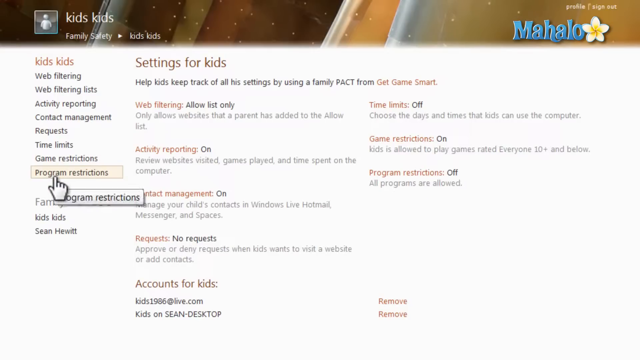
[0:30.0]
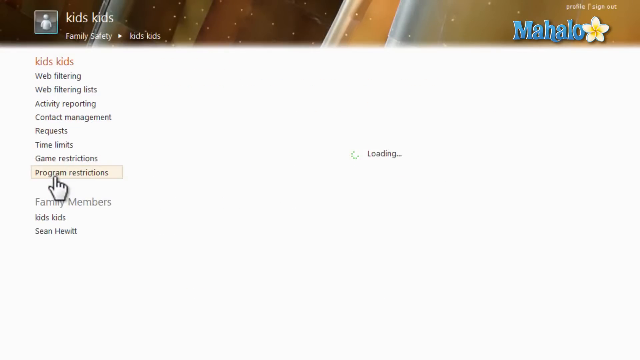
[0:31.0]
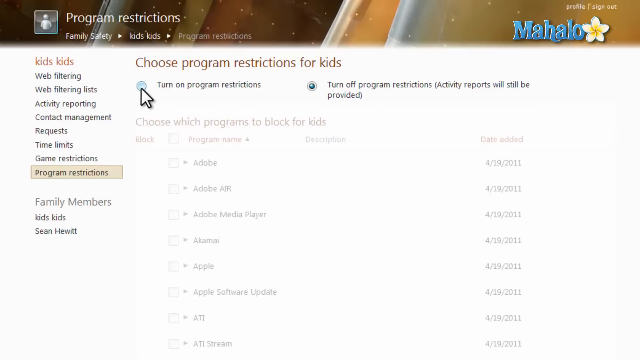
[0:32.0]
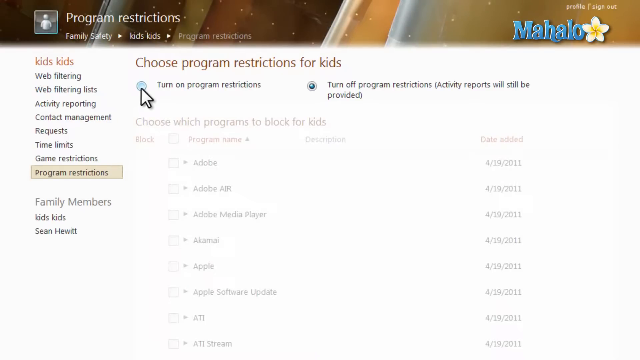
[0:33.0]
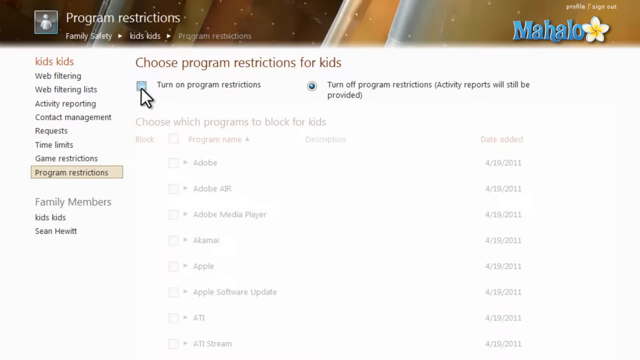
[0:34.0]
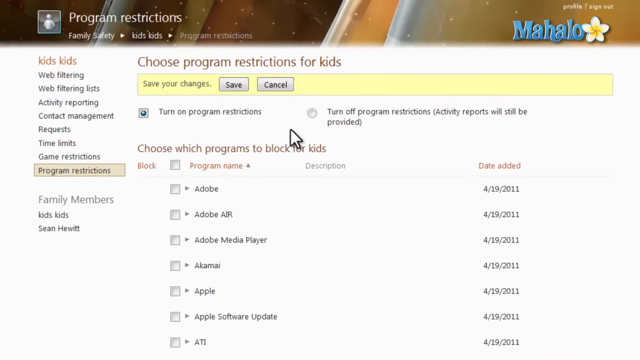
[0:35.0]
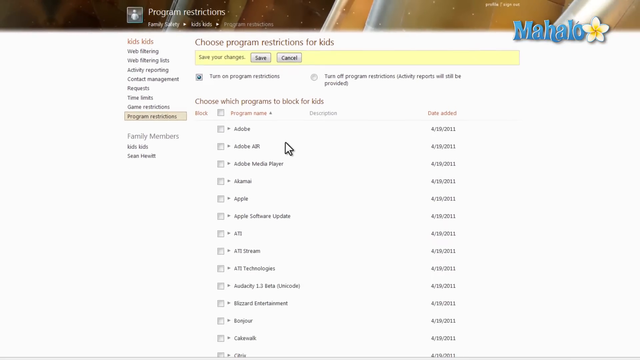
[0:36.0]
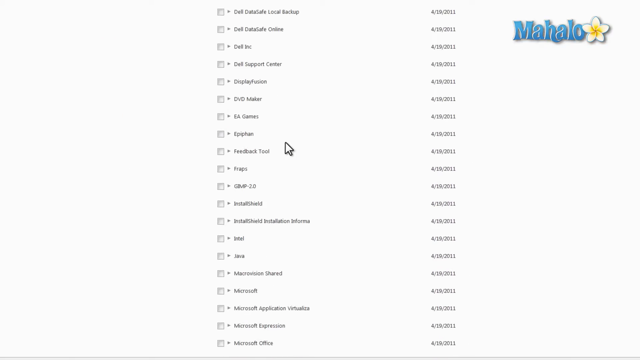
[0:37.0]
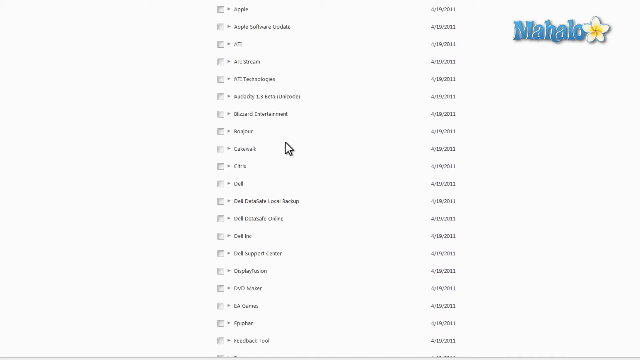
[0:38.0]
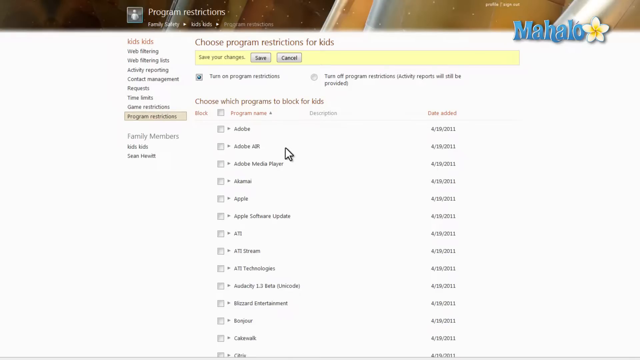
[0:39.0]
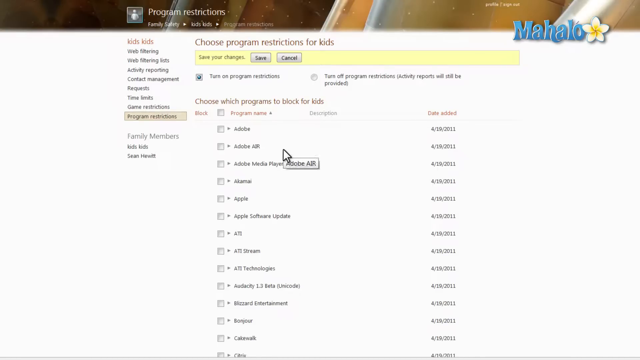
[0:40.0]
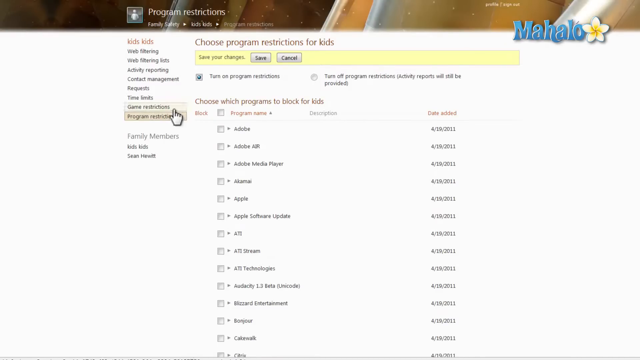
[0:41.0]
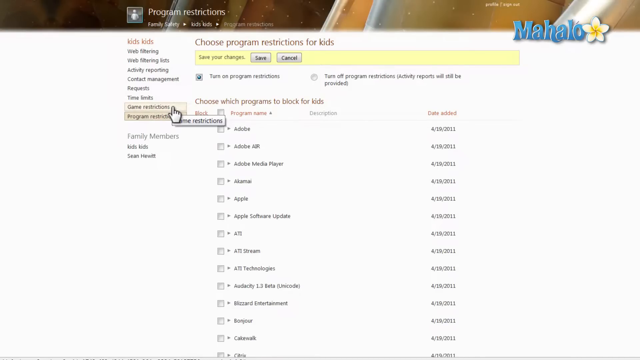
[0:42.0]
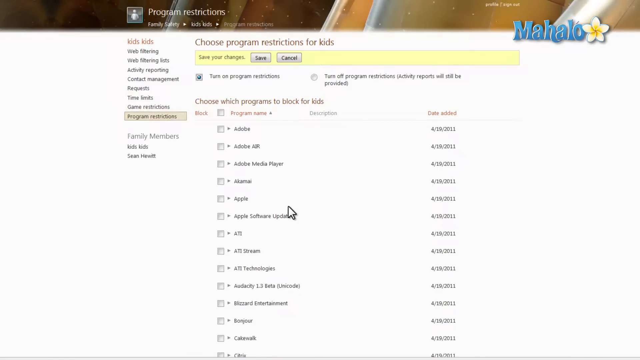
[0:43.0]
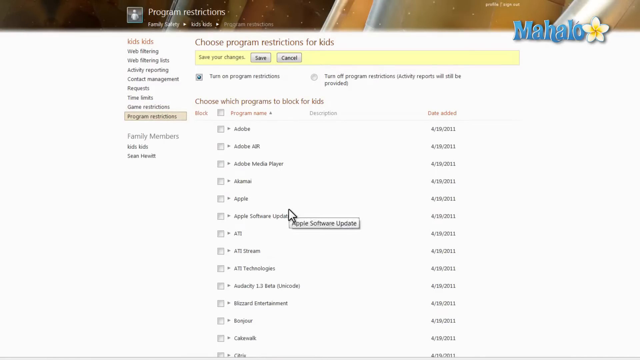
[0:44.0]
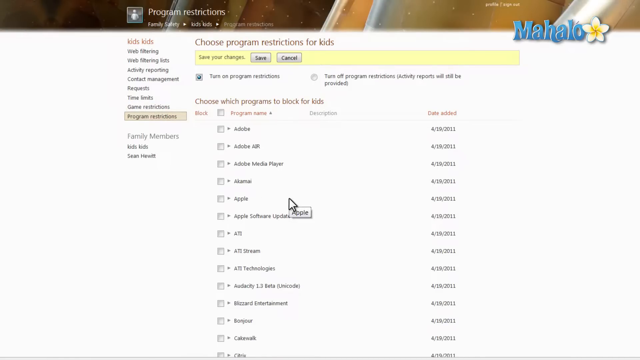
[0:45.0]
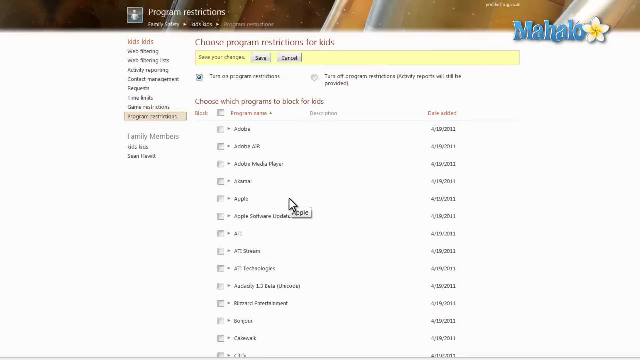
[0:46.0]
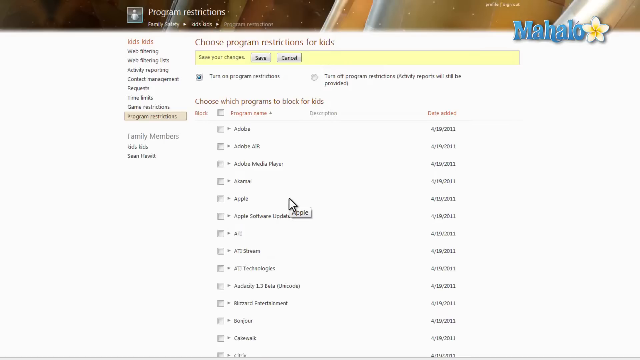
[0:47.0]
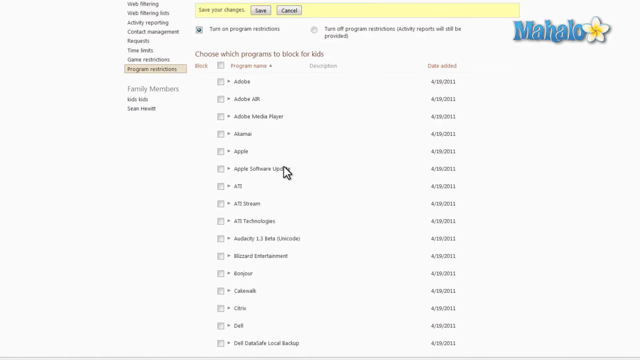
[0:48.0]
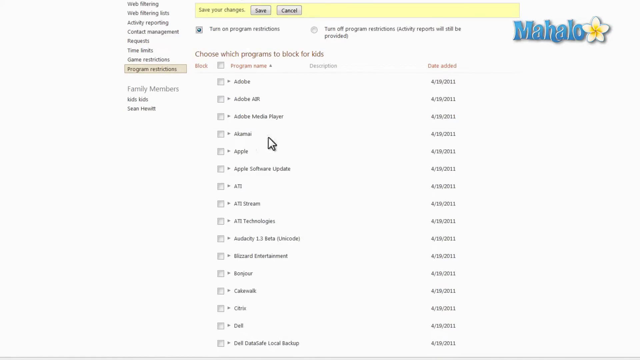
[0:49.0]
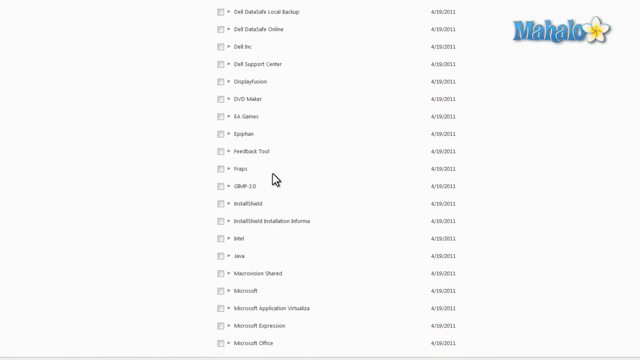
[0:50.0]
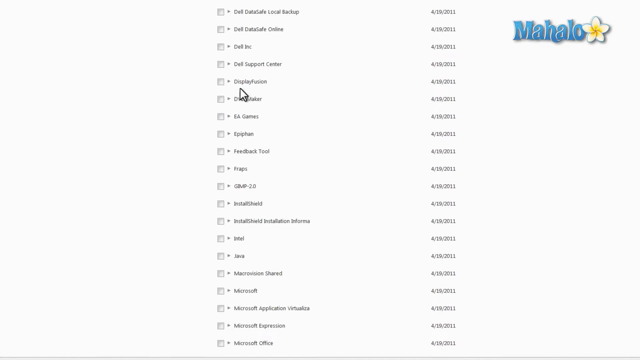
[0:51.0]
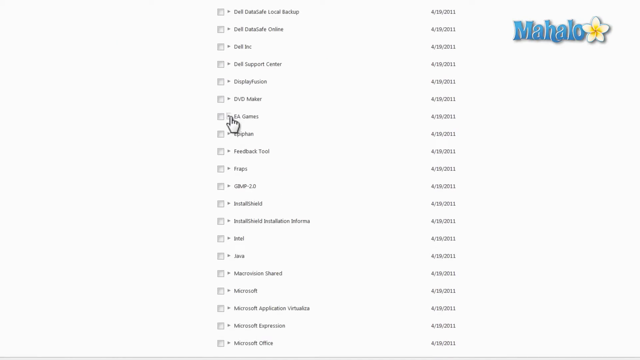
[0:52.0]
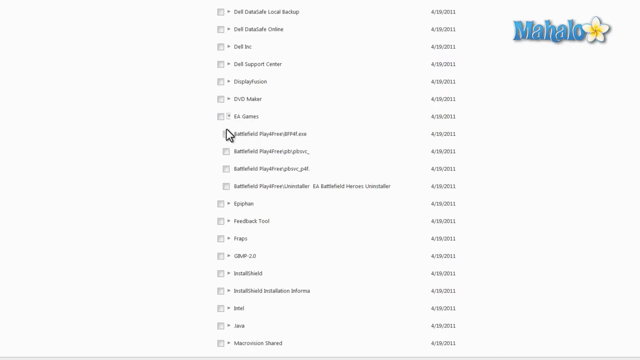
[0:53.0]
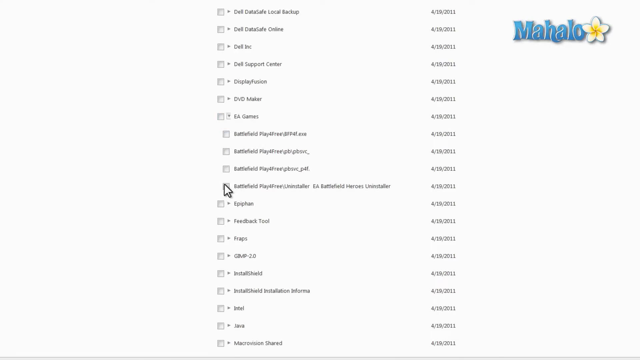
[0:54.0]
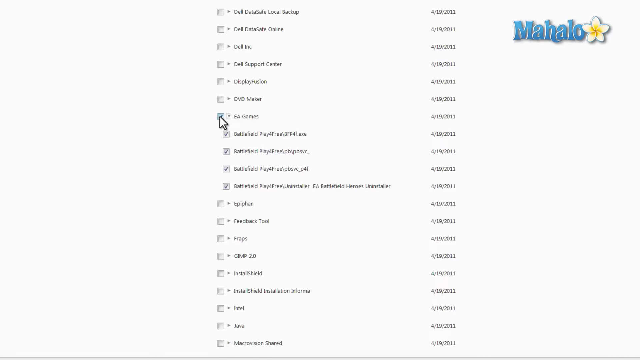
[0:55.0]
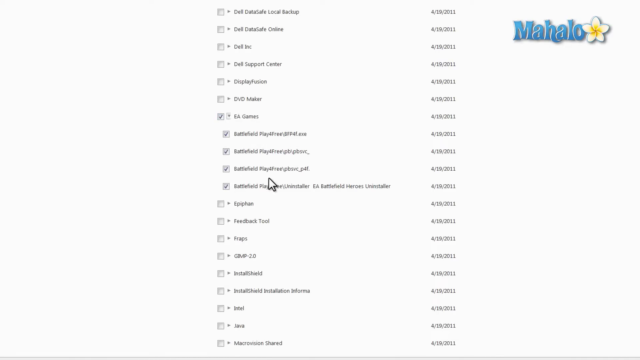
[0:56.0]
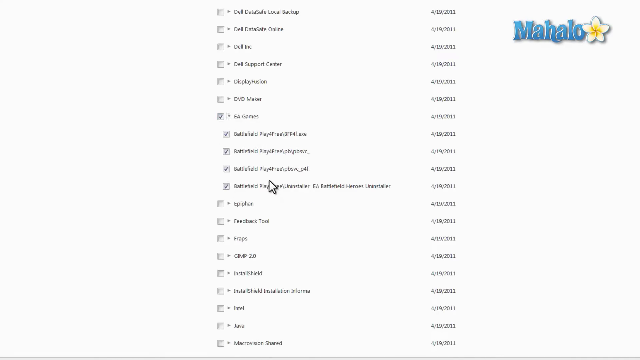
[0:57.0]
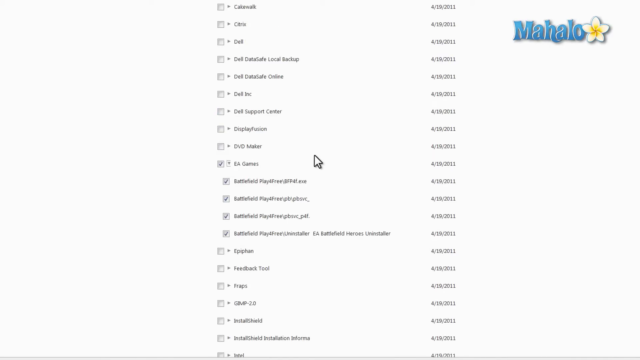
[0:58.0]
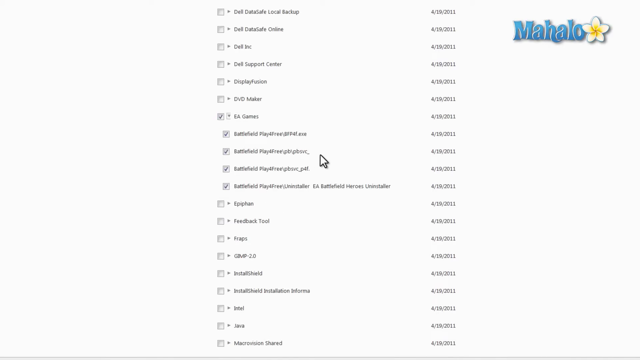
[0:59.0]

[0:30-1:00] Sean clicks on Program Restrictions, bringing it up. The section is titled "Choose program restrictions for kids." There are two circles to select. The right one is the default and reads "Turn off program restrictions" with "activity reports will still be provided" in brackets. The left one, which he hovers his mouse over, is called "Turn on program restrictions." He clicks it, and a large number of items become selectable that were grayed out before. A couple of buttons appear above with yellow text reading "Save your changes," along with a Save button and a Cancel button. The view zooms out a bit, showing all the options that can be blocked, but he does not really select one. He hovers over game restrictions first before moving his mouse back over the apps.